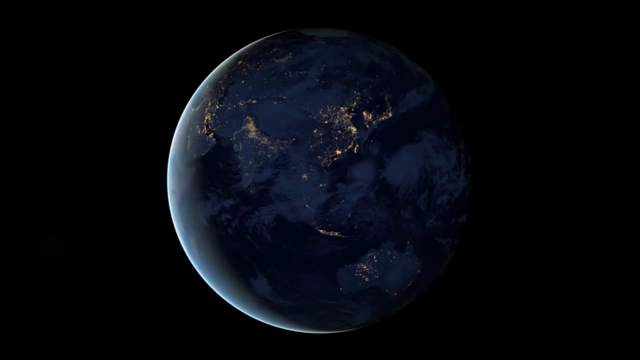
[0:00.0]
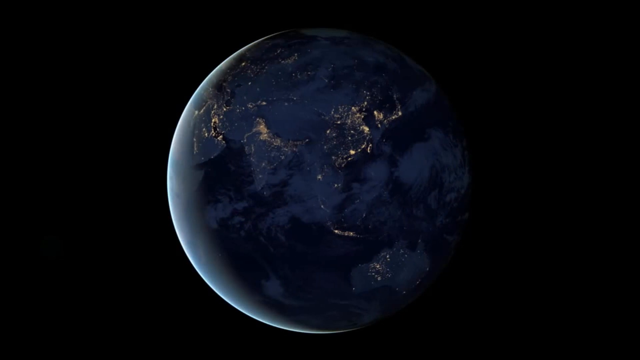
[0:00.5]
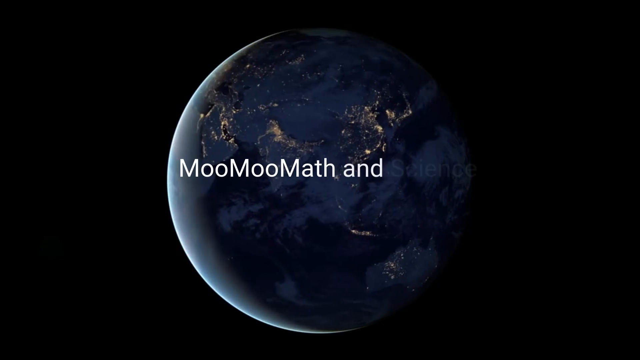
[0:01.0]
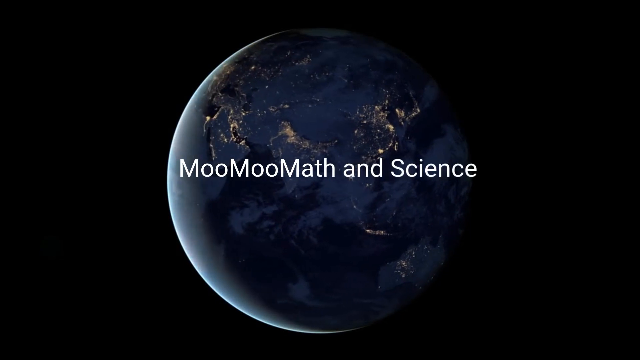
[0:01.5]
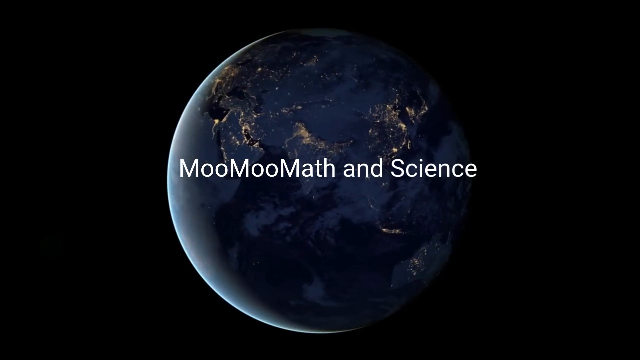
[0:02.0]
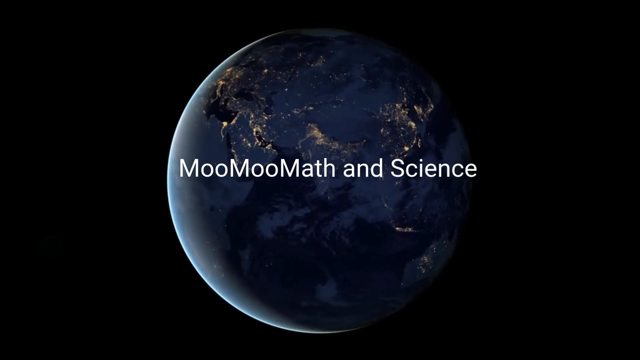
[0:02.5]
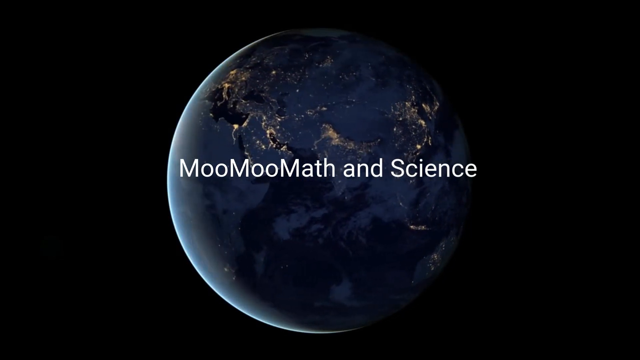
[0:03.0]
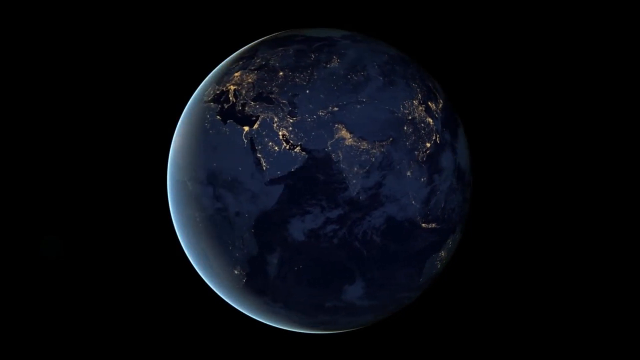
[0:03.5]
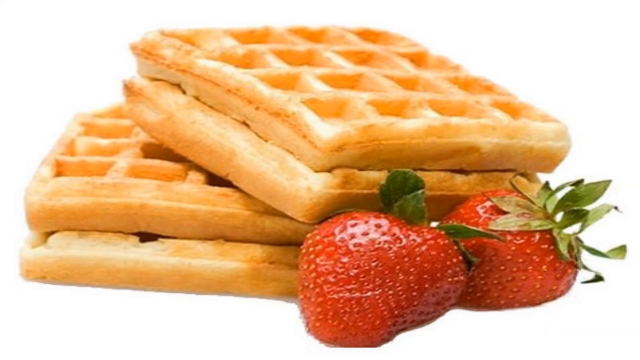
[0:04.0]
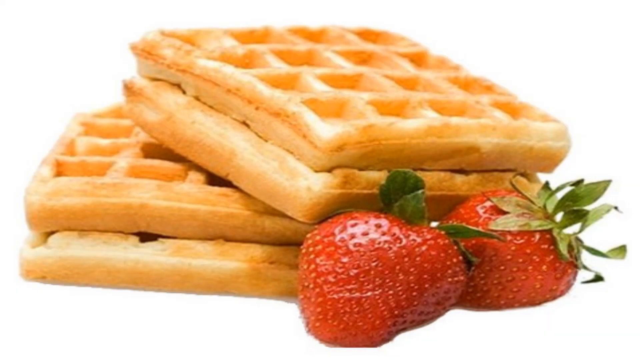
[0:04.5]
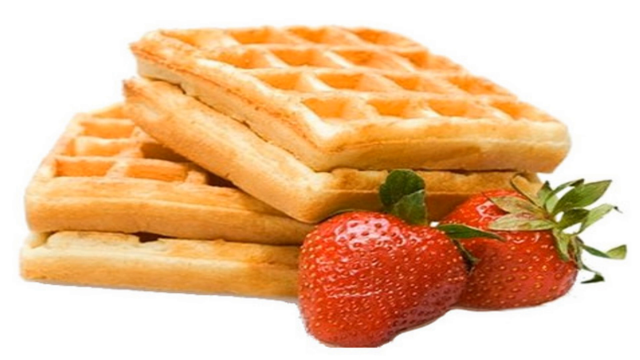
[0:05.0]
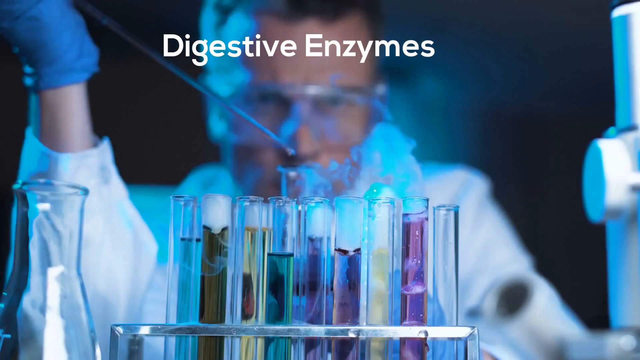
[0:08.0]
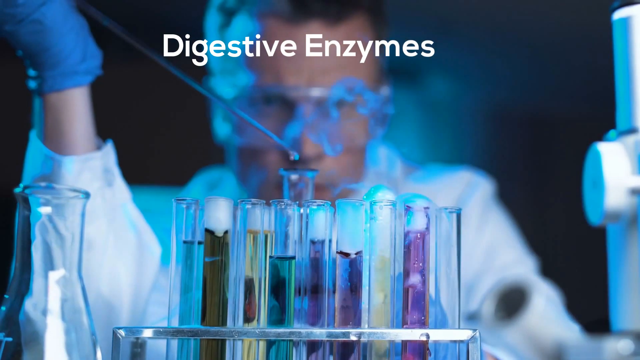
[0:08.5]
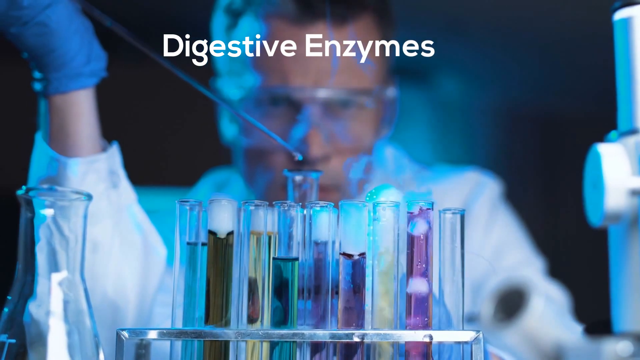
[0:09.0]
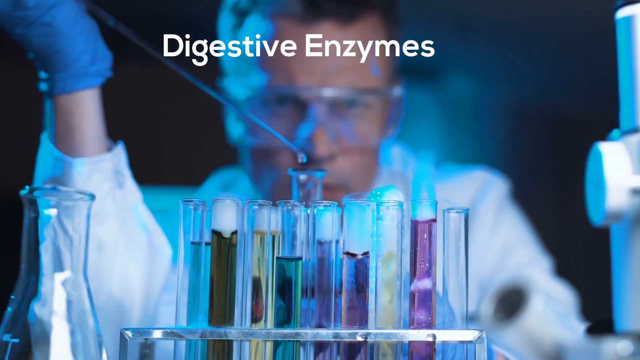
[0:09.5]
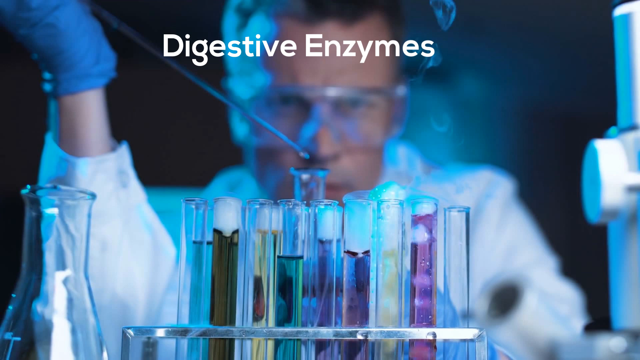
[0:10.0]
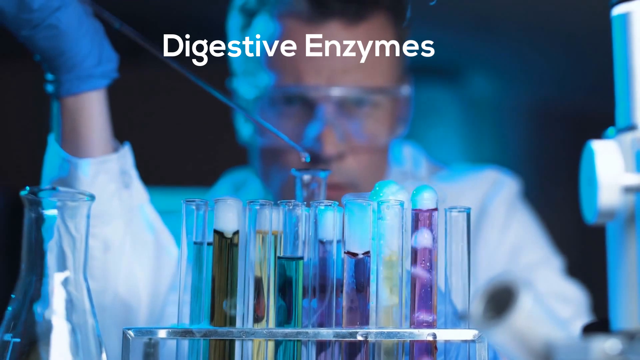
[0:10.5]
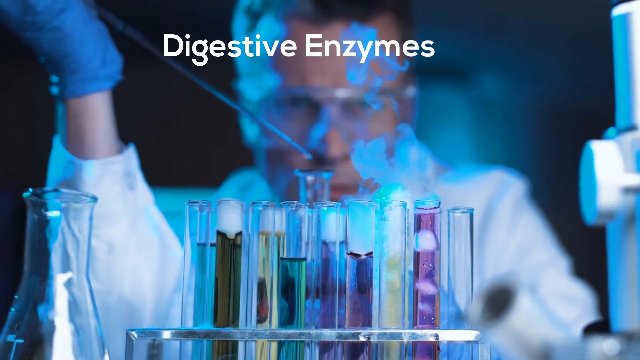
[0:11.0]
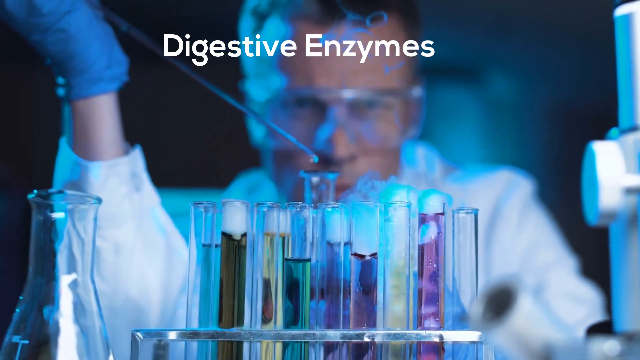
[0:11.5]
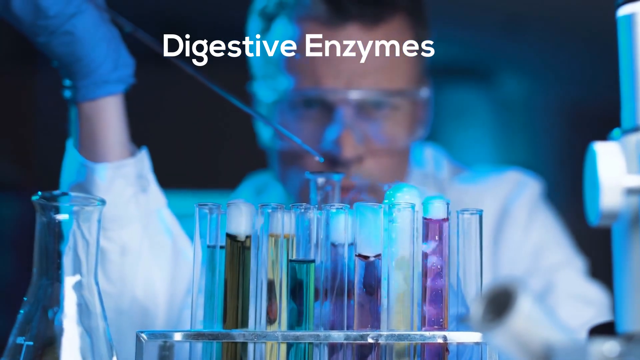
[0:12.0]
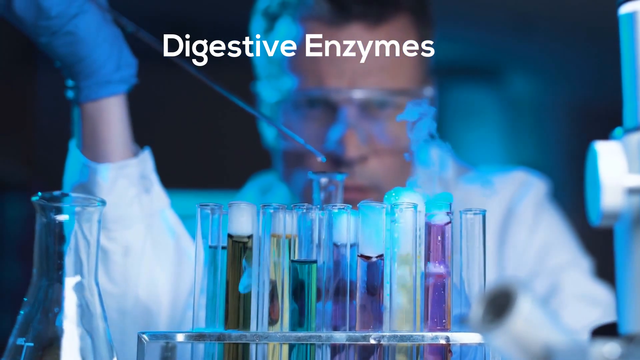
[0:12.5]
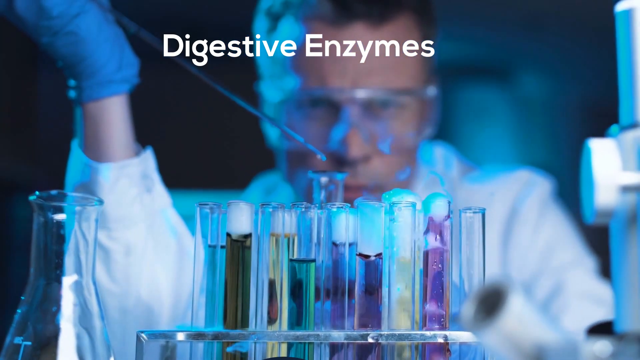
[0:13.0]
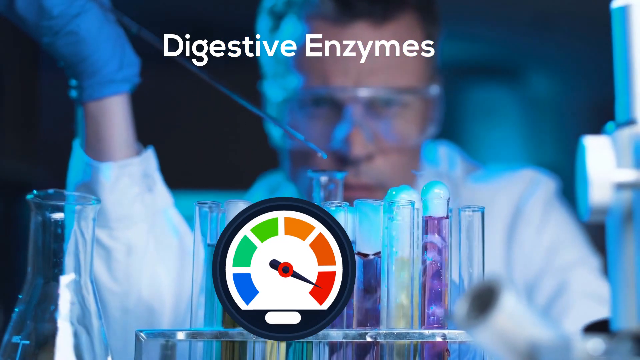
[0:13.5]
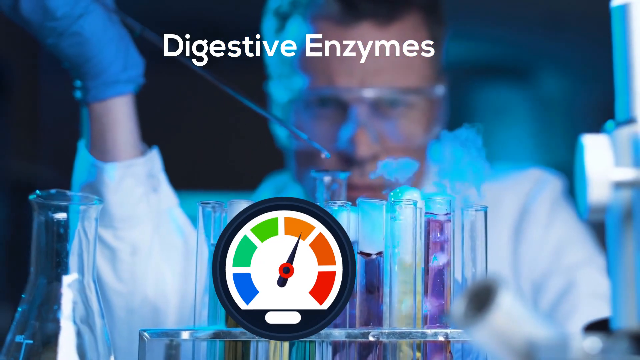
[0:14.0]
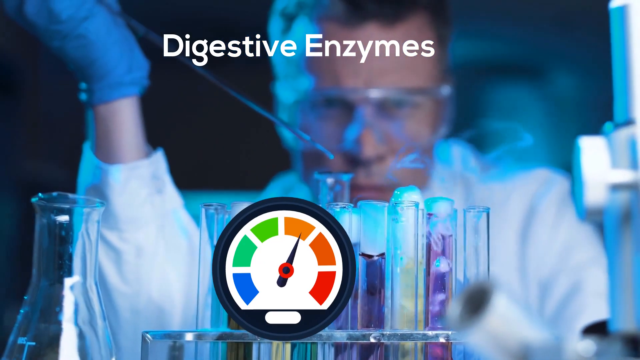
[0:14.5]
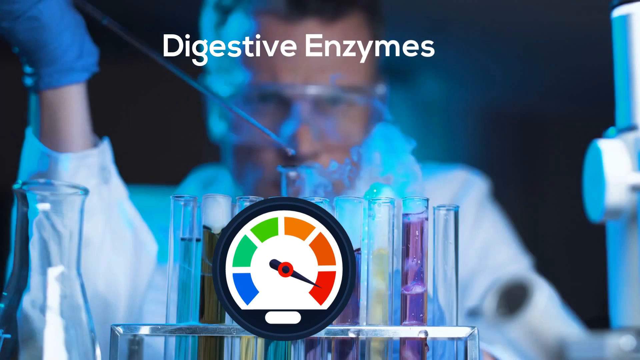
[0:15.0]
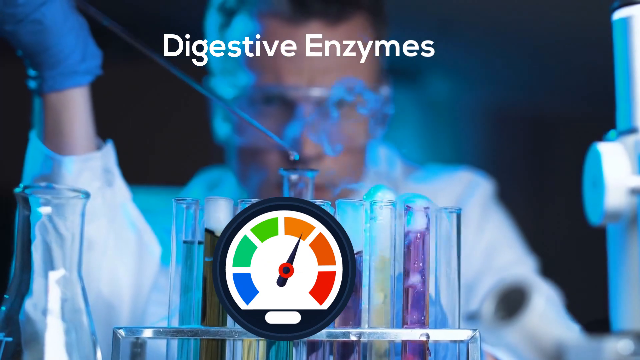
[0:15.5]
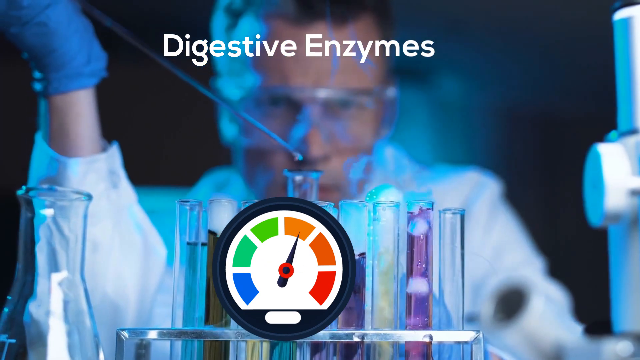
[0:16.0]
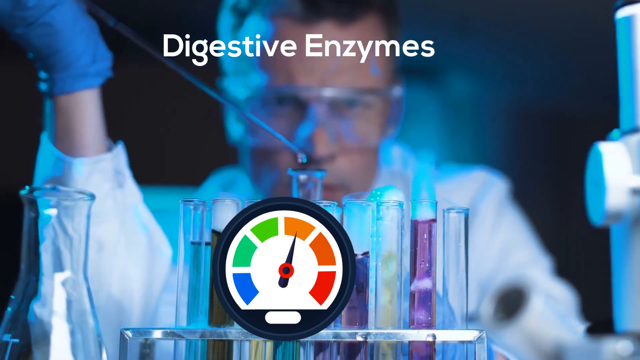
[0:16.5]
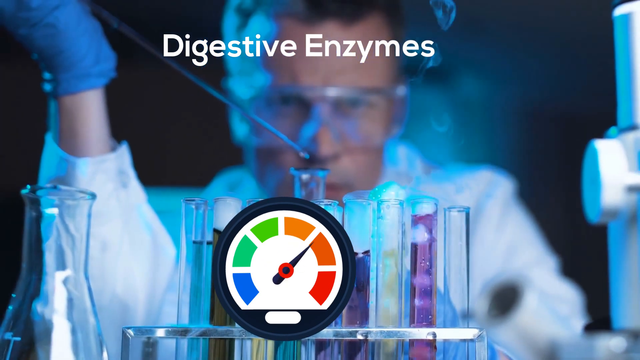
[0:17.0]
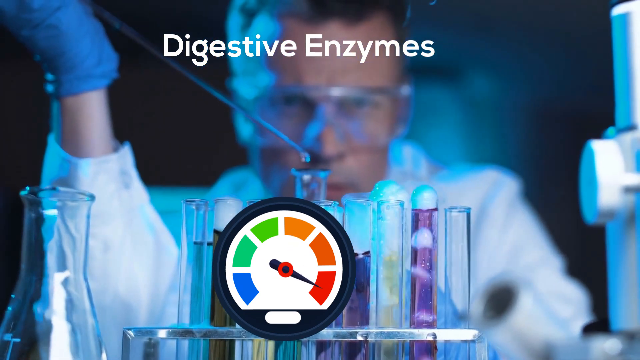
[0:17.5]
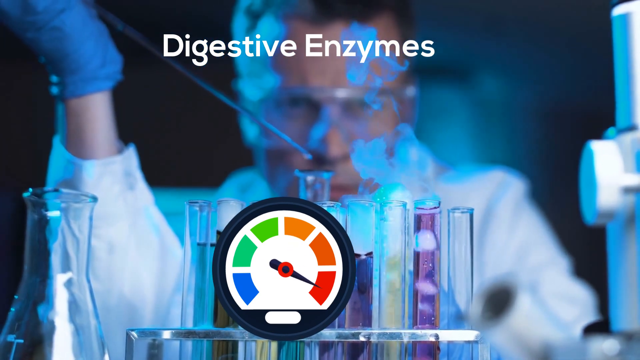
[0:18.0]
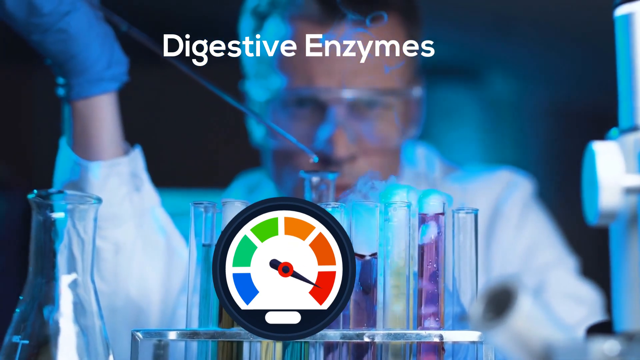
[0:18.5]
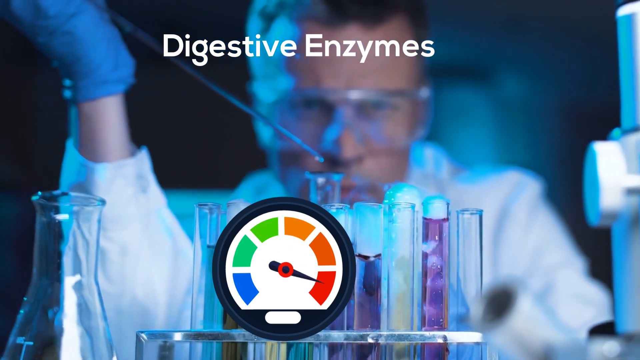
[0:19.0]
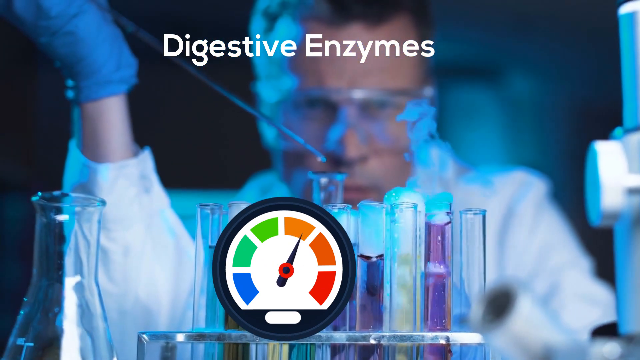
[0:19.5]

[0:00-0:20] A world globe is shown, and then the words "digestive enzymes" appear along with four species of wasps and cockroaches. A person wearing a white lab coat is doing an experiment, with some experimental items set up for him, some of which are boiling. He is carrying something that he dips into them.